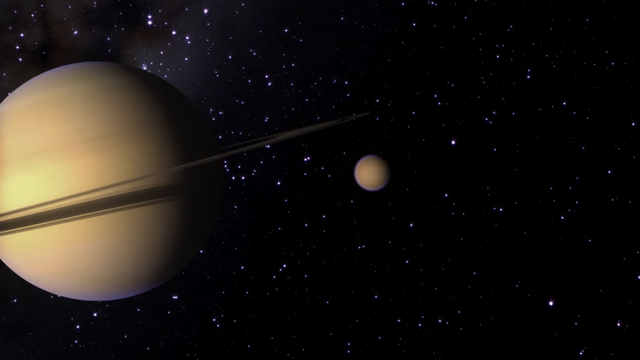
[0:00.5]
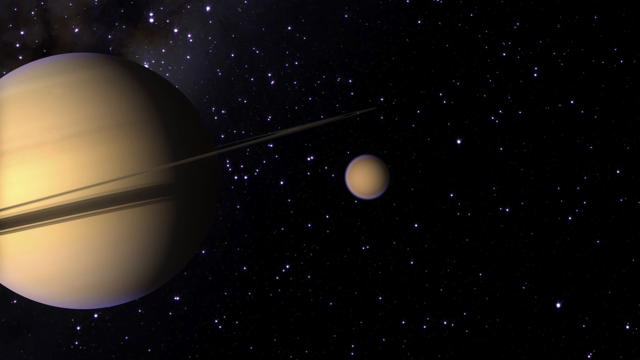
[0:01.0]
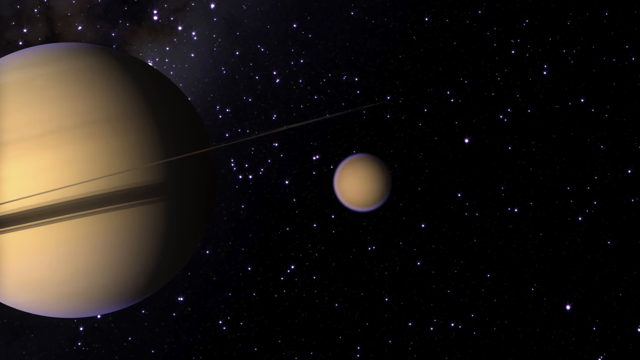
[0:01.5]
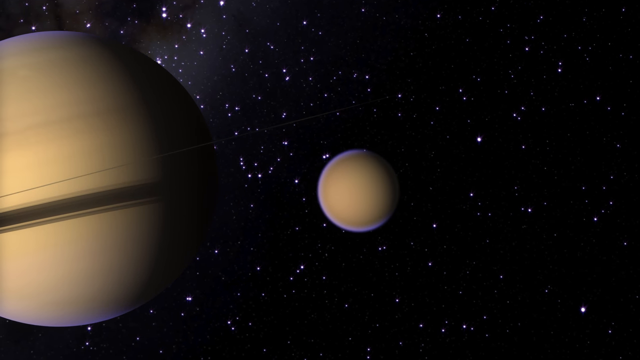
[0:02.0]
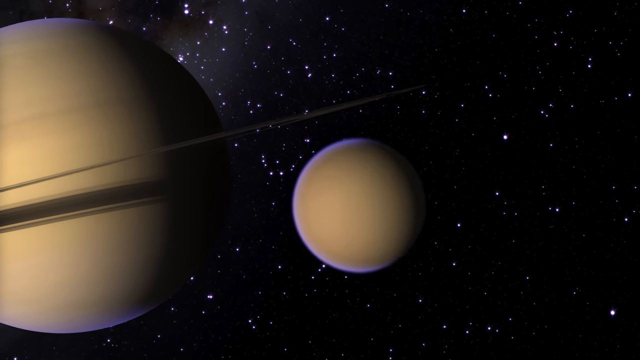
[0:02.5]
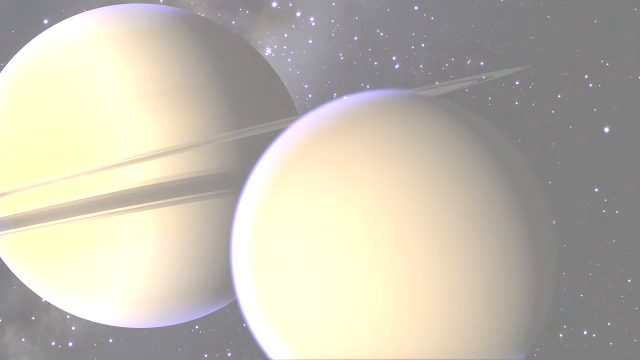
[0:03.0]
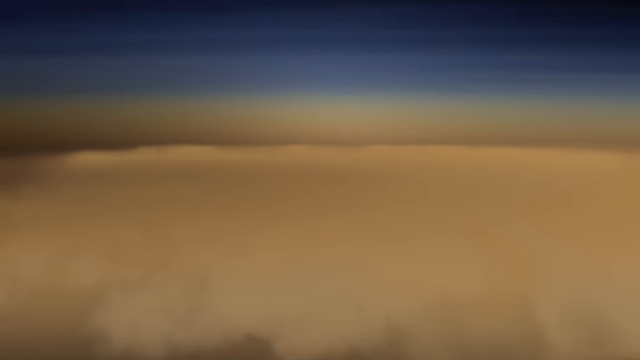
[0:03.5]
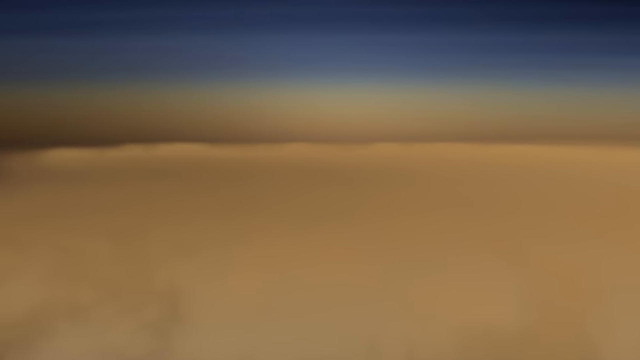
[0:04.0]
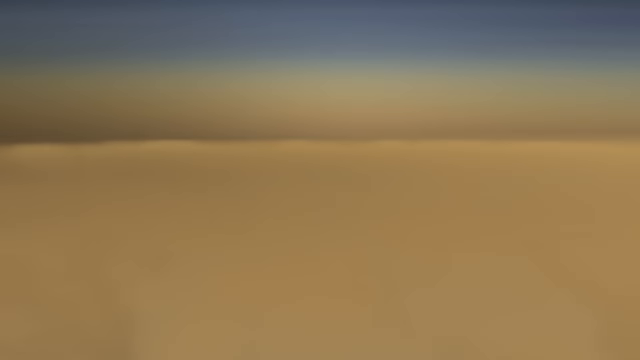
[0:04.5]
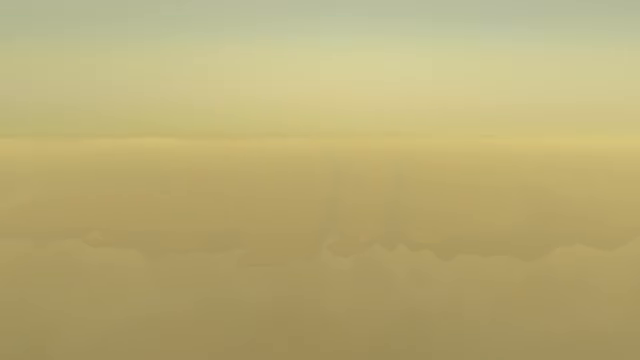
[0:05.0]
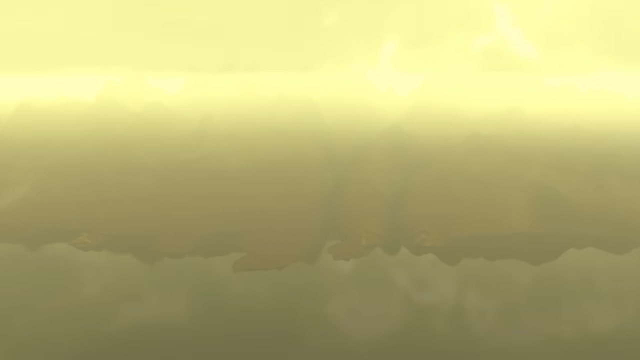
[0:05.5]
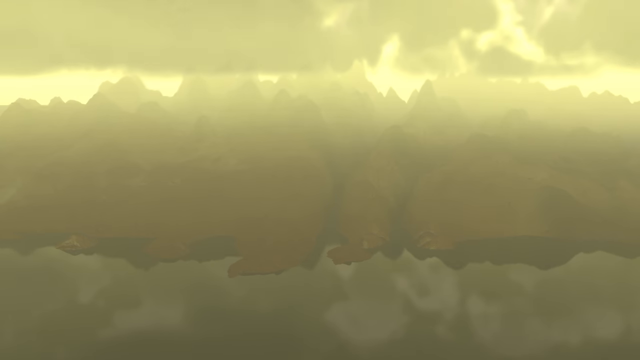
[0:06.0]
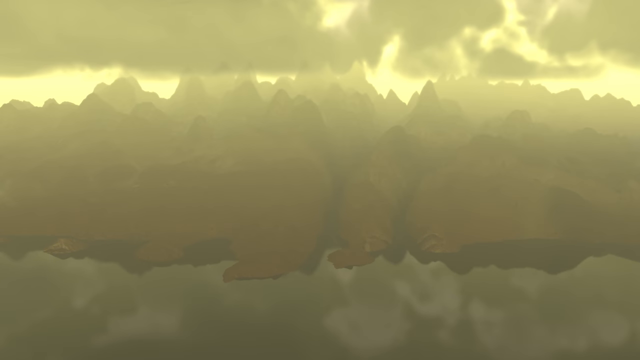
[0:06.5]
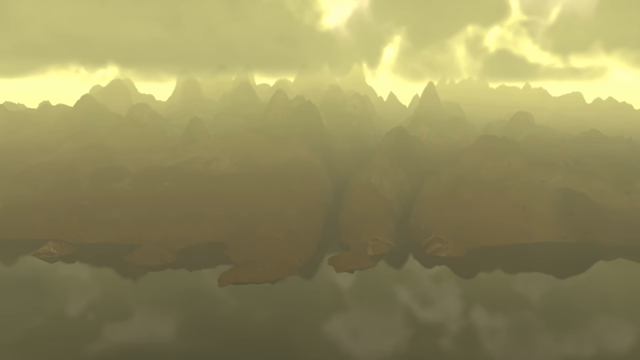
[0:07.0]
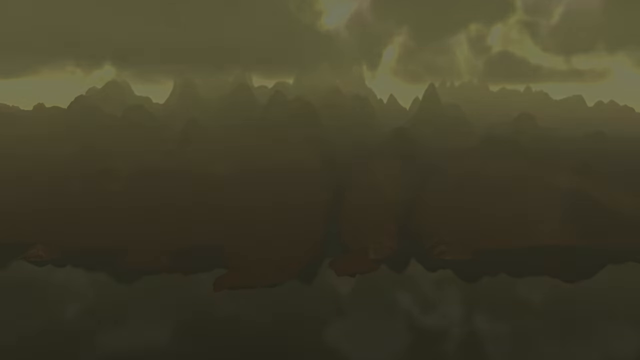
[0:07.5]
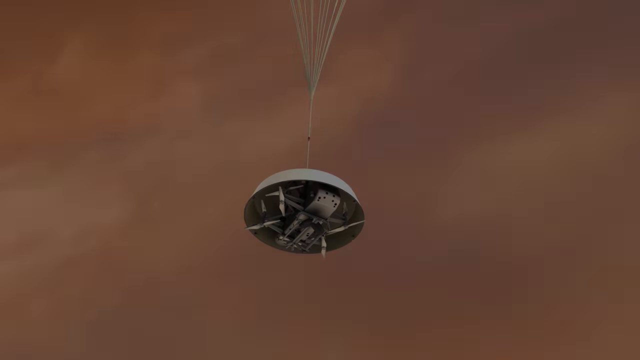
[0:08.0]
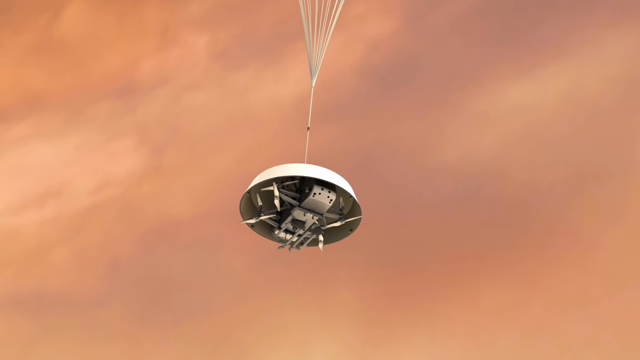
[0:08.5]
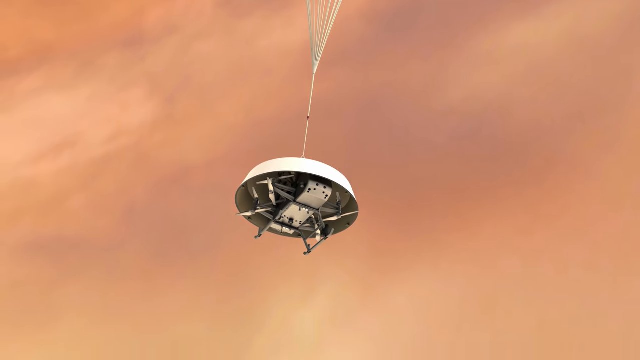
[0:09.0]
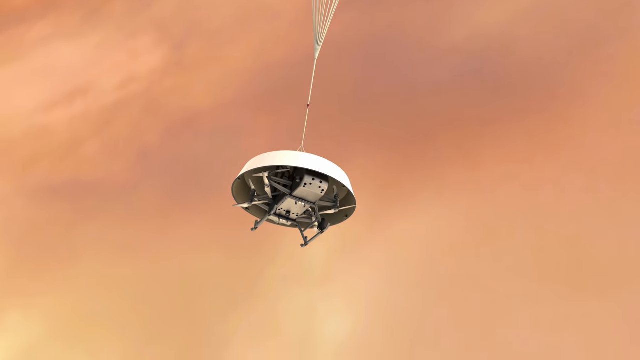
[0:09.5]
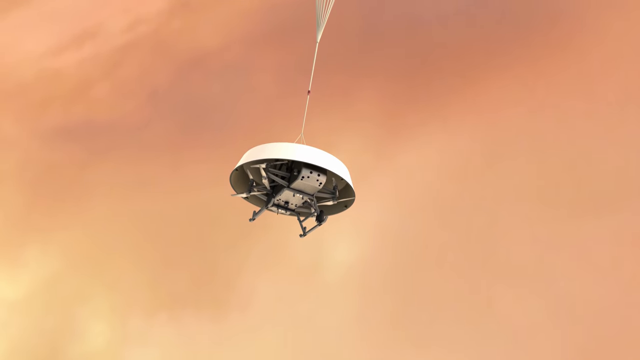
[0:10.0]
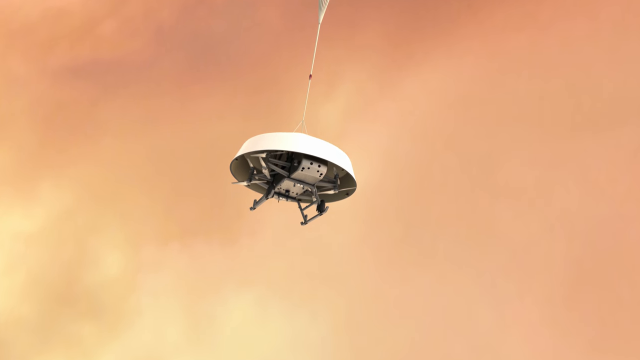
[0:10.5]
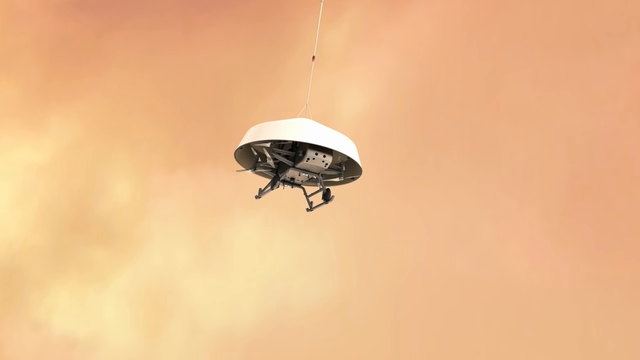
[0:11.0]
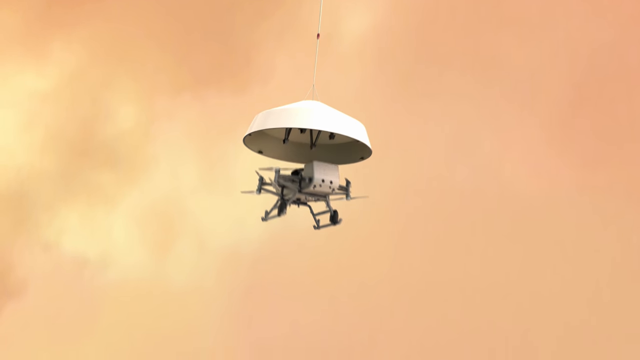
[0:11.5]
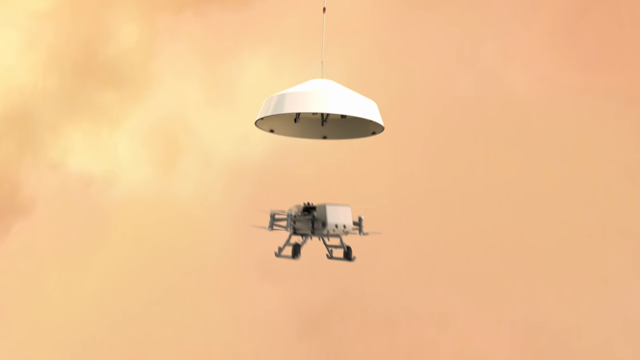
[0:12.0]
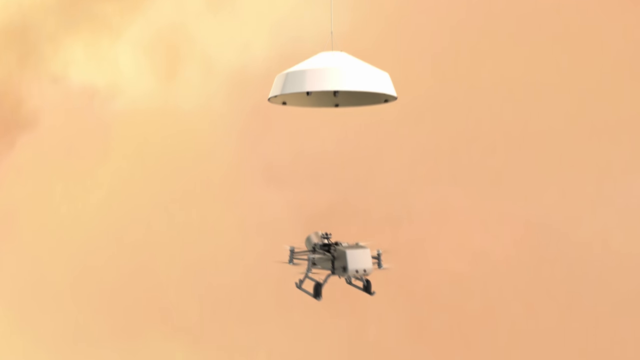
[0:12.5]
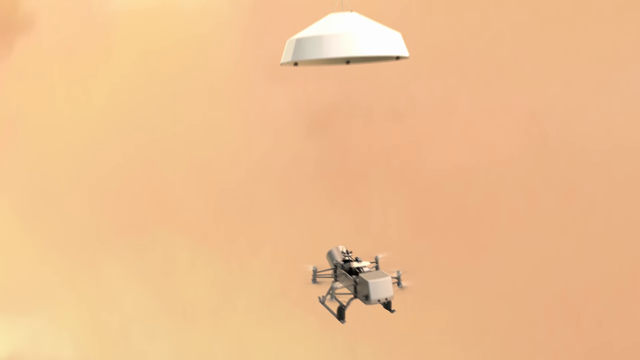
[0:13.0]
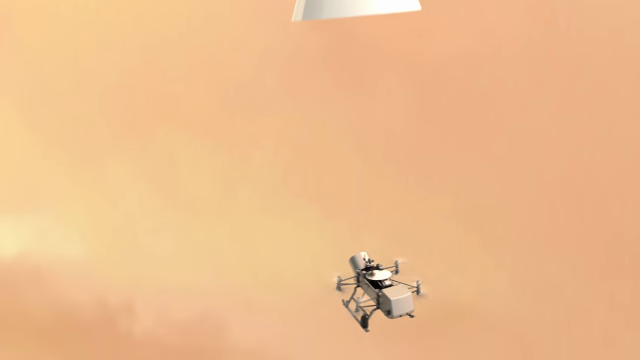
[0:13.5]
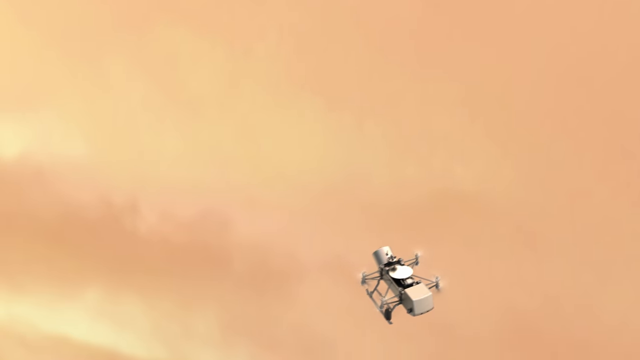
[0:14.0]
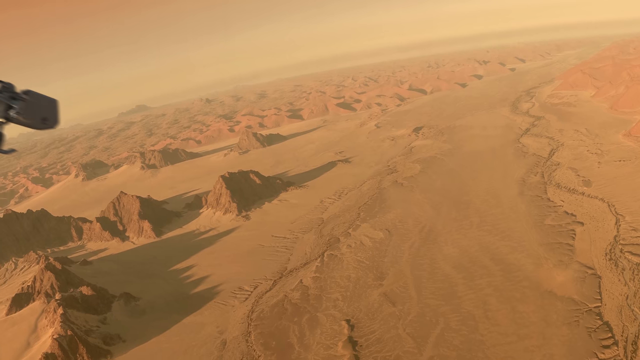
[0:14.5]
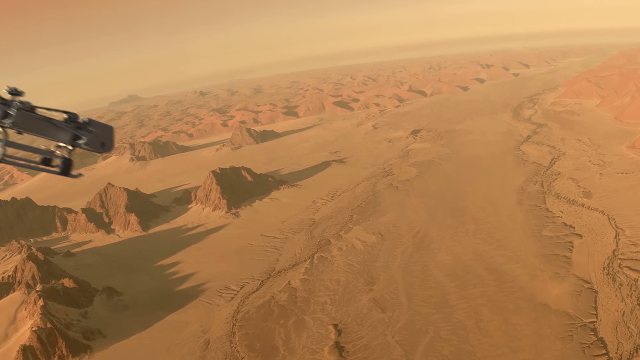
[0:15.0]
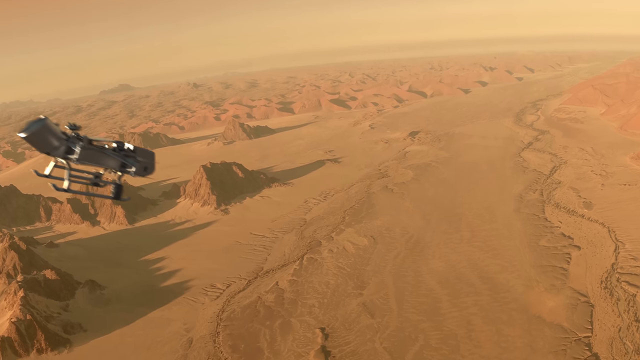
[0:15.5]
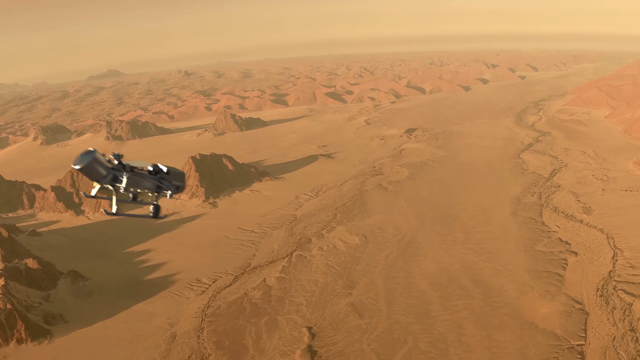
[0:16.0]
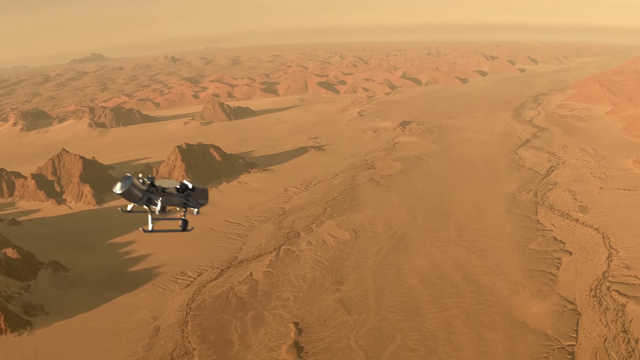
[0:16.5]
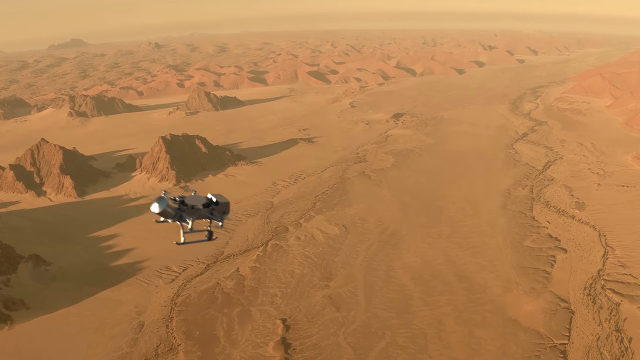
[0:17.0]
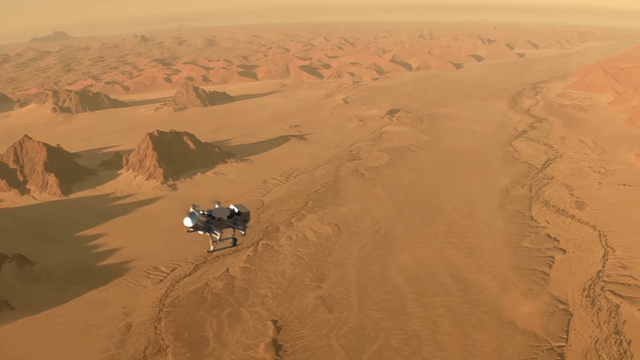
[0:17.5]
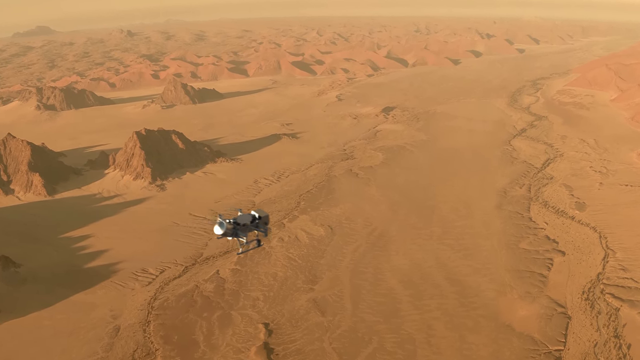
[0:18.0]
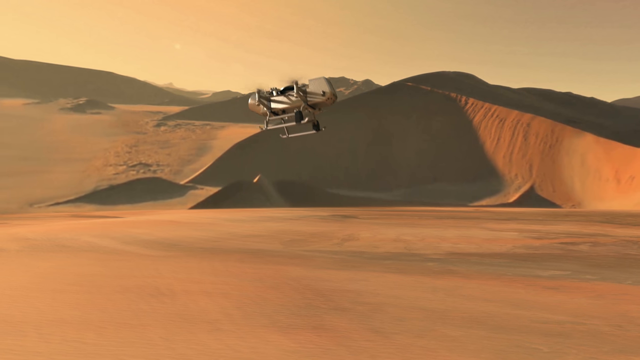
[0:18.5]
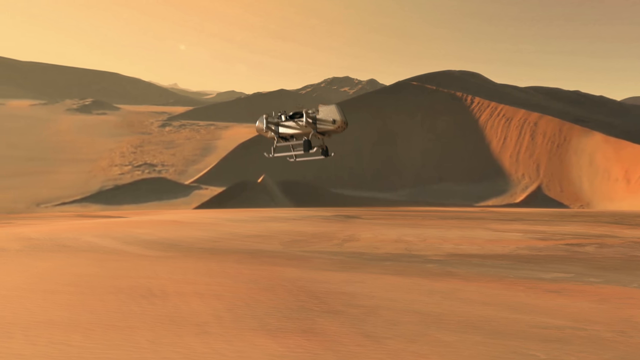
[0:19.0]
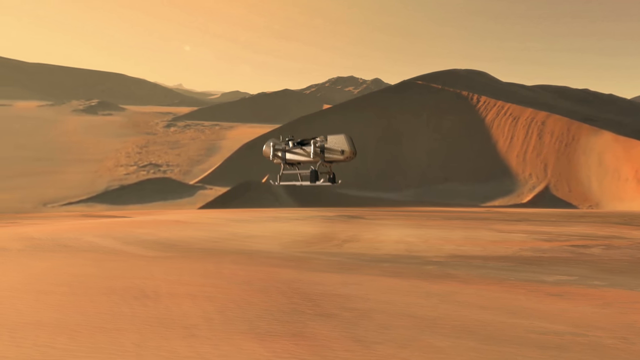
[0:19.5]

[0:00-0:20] A black screen quickly transitions to a scene in outer space that seems to be computer-generated, with stars throughout. Saturn is on the left-hand side, an off-white, yellowish planet with its ring around it. In the center of the screen, in the distance, is another planet of a roughly peach color. The planets start coming at the camera, and the planet that was in the background comes all the way to the front and is in front of Saturn. There is a flash, and the screen transitions to something almost like sky: blue sky across the top portion and a tan color across roughly the bottom two-thirds, possibly a close-up of the planet. This transitions to a yellow screen, almost like a bright light, and clouds appear. The screen goes dark, and then pinkish-tan clouds are in the background. A white device of some sort is dropped; legs come out of it, almost like sled-like legs, and a drone departs from the device. The drone flies left to right and downward toward the floor of the planet.